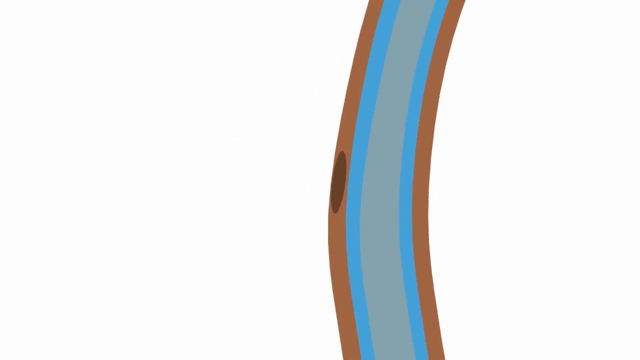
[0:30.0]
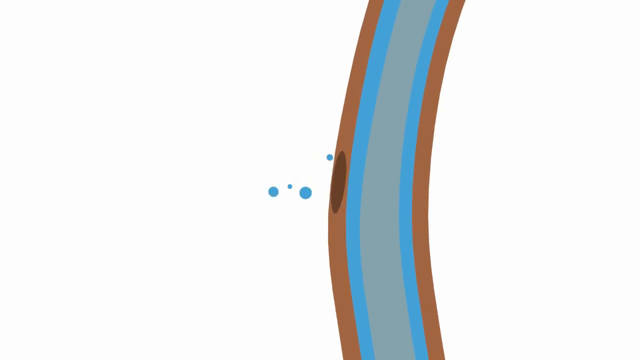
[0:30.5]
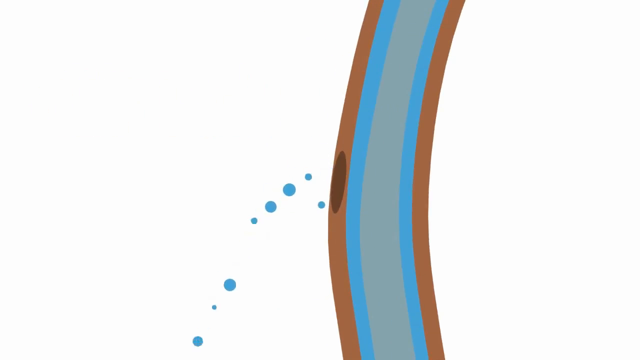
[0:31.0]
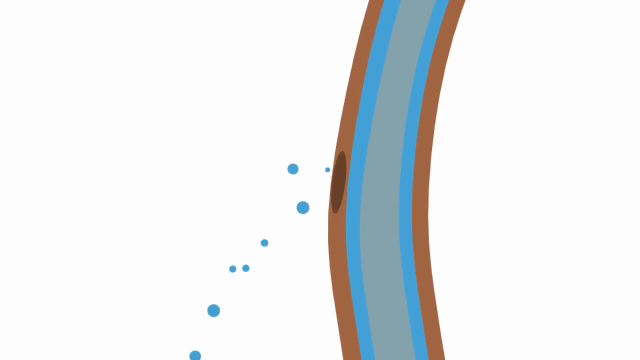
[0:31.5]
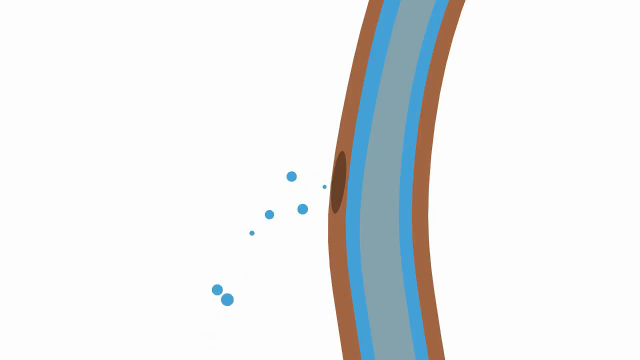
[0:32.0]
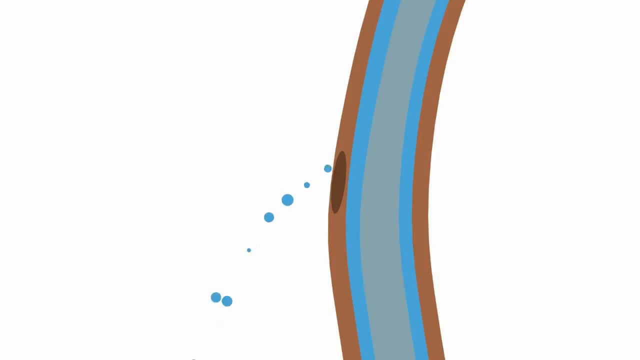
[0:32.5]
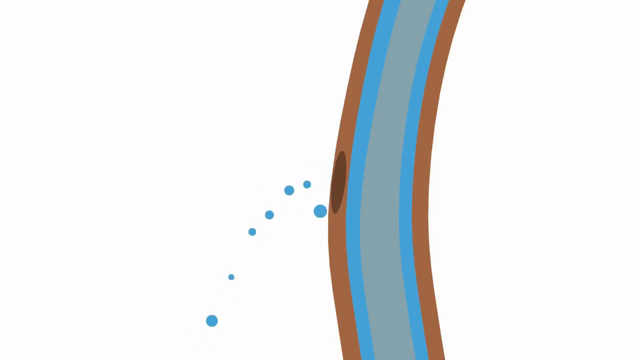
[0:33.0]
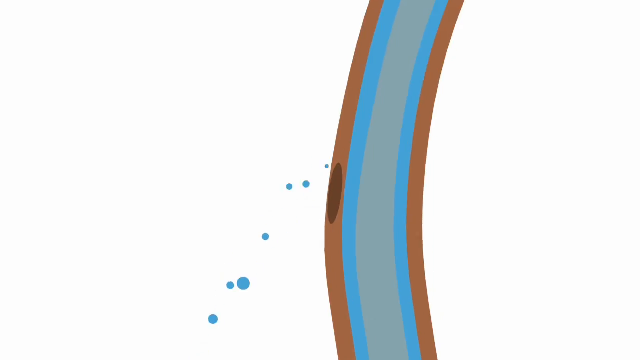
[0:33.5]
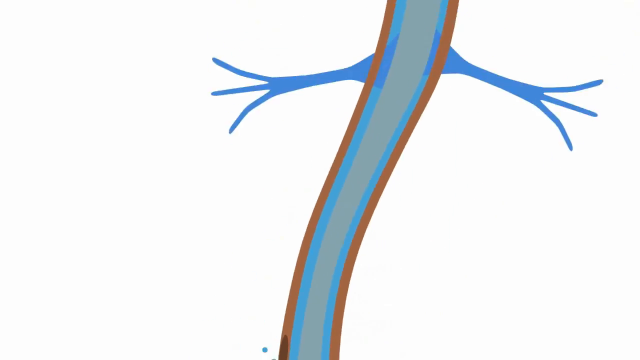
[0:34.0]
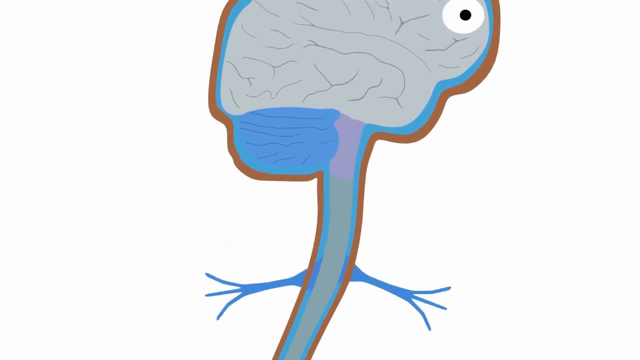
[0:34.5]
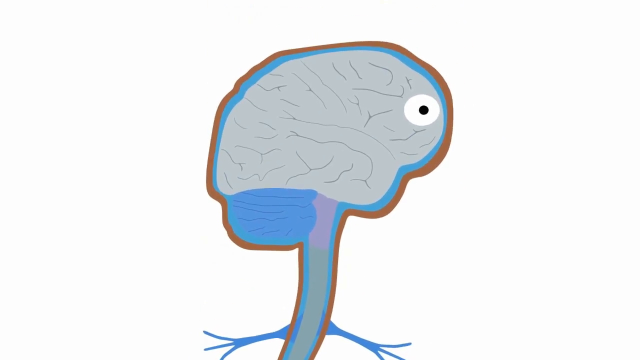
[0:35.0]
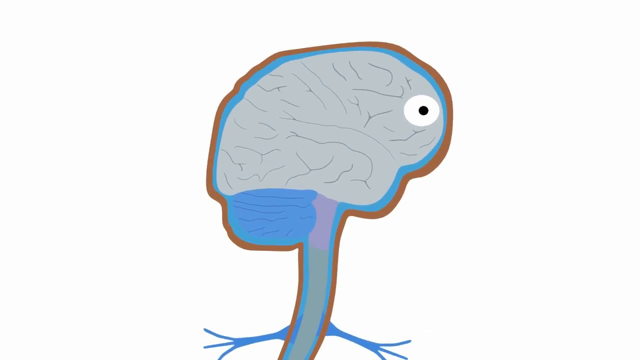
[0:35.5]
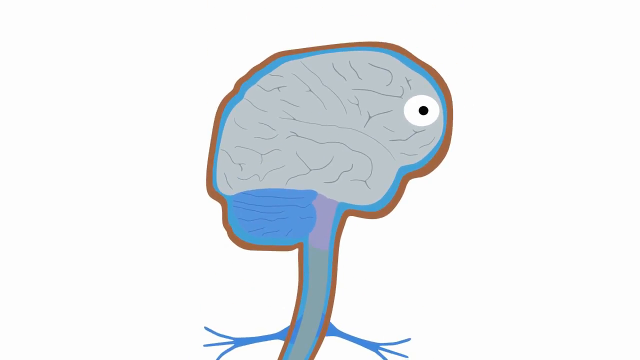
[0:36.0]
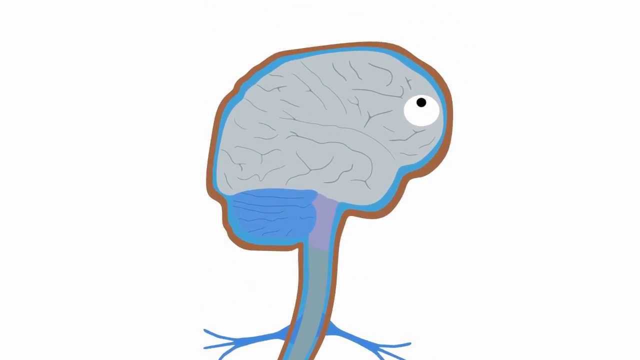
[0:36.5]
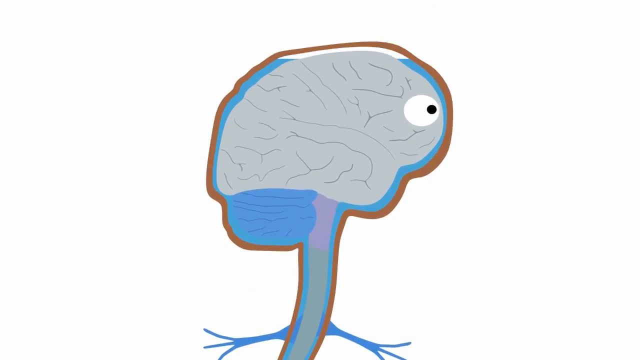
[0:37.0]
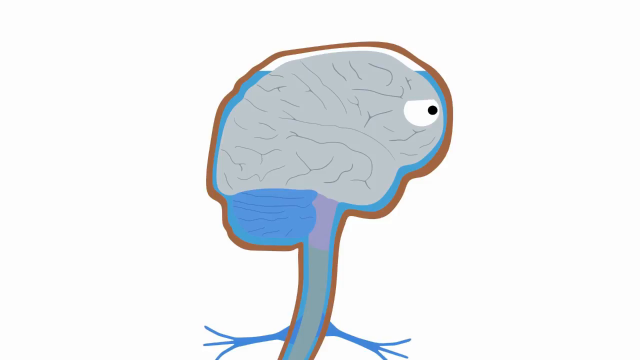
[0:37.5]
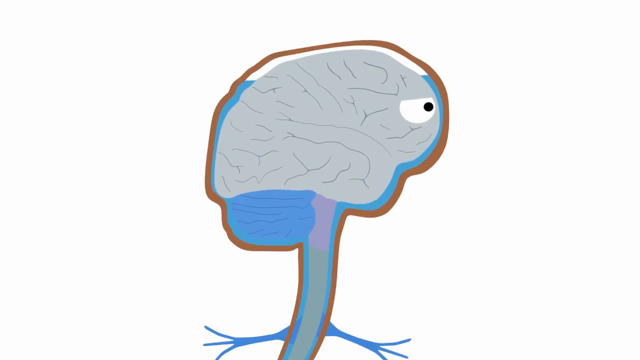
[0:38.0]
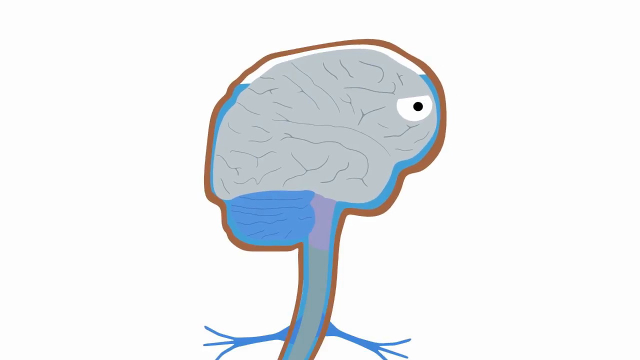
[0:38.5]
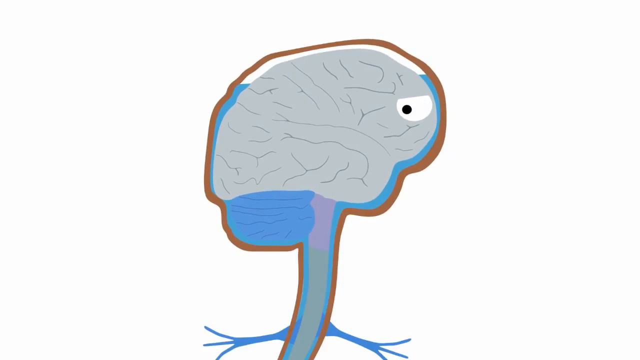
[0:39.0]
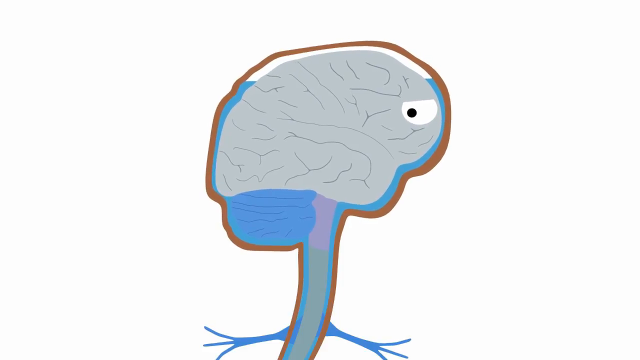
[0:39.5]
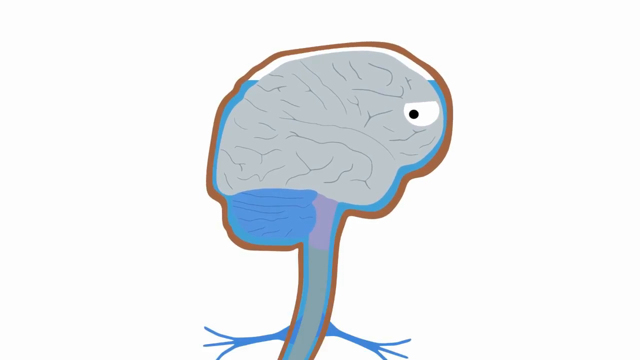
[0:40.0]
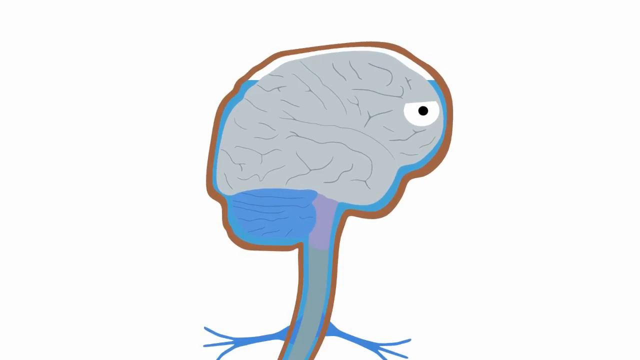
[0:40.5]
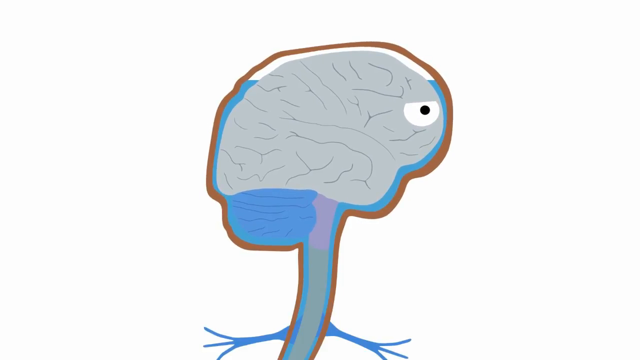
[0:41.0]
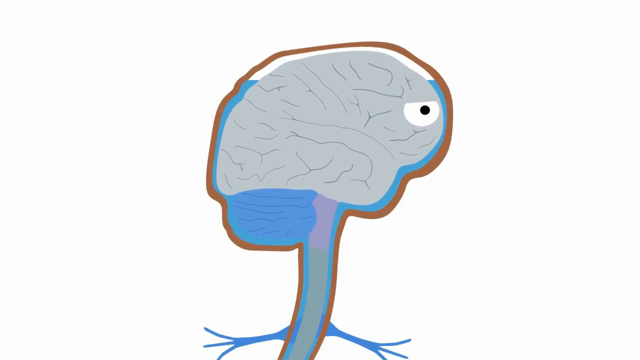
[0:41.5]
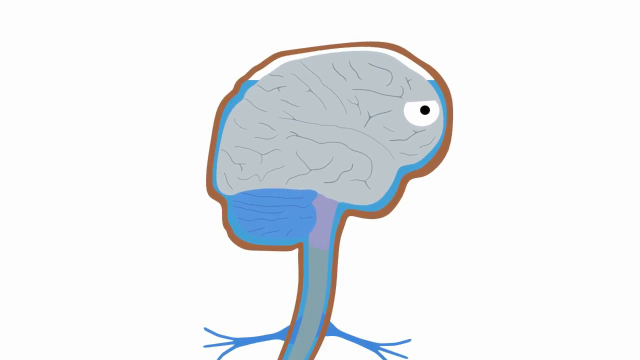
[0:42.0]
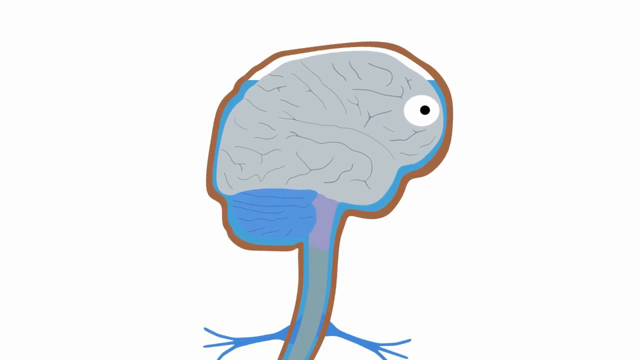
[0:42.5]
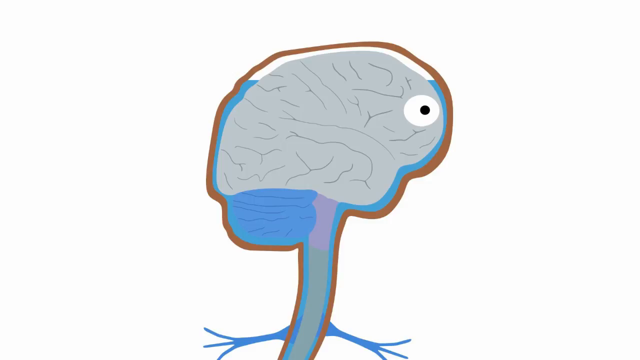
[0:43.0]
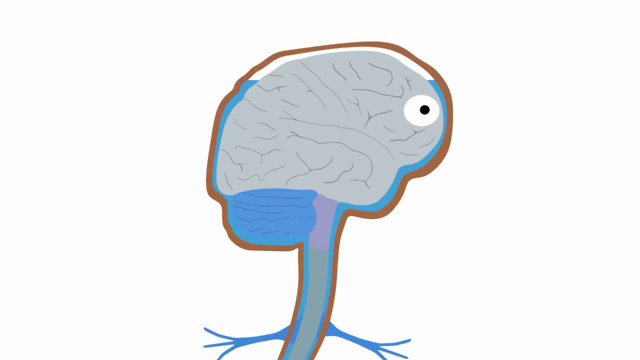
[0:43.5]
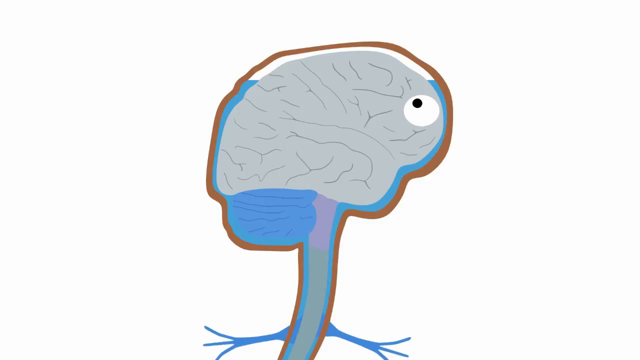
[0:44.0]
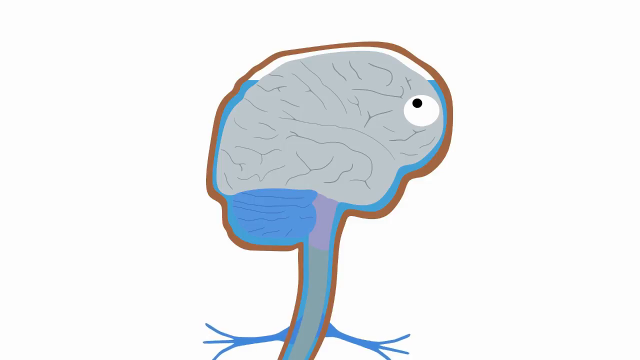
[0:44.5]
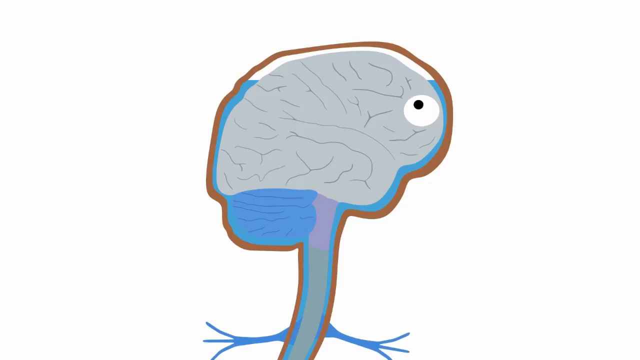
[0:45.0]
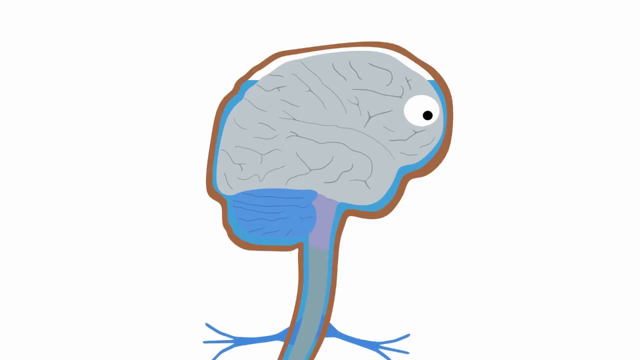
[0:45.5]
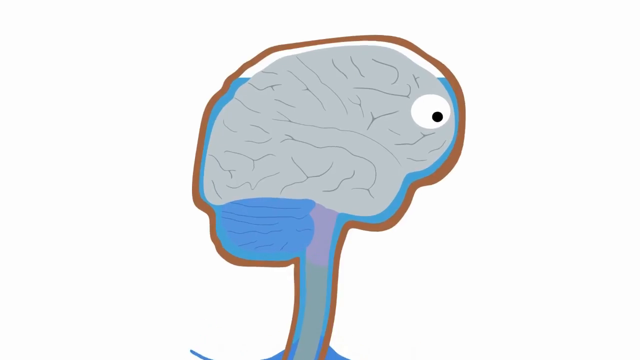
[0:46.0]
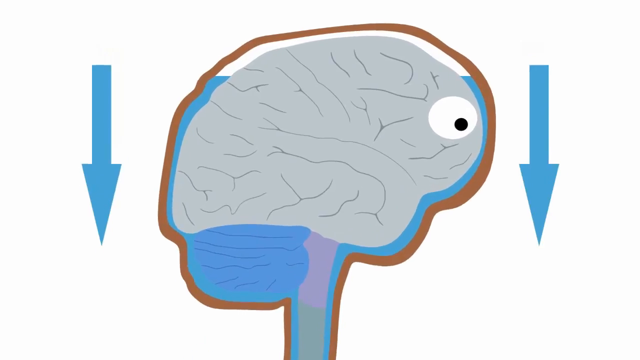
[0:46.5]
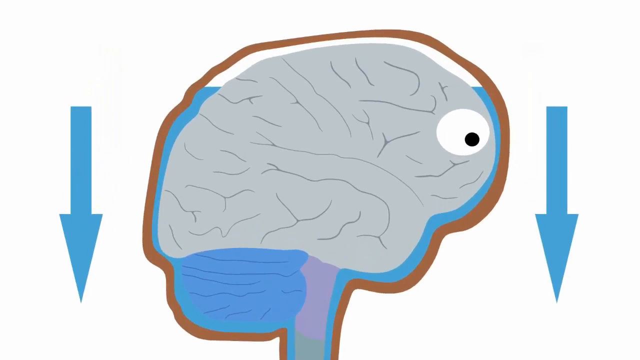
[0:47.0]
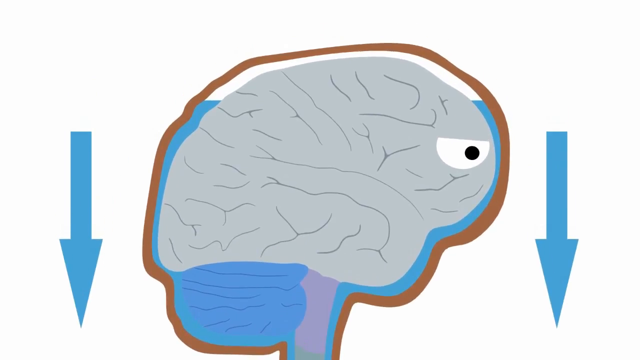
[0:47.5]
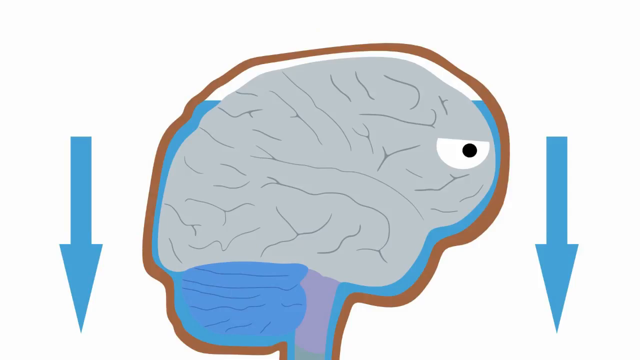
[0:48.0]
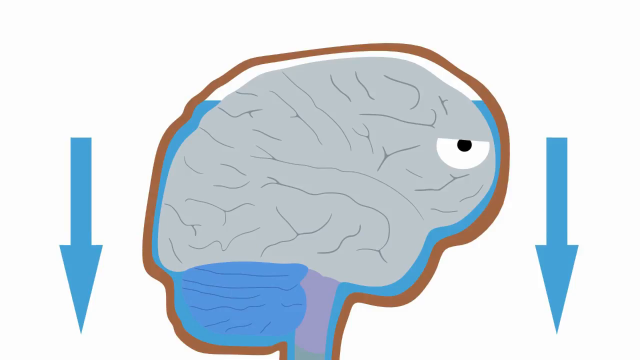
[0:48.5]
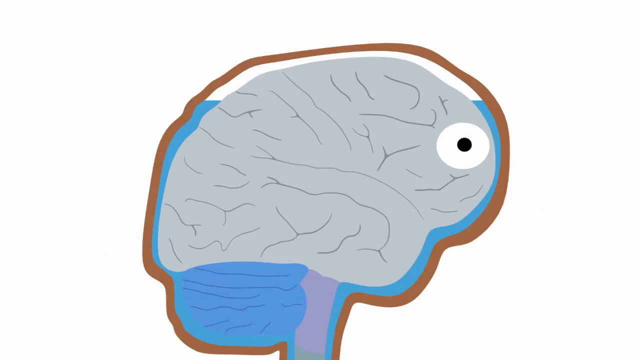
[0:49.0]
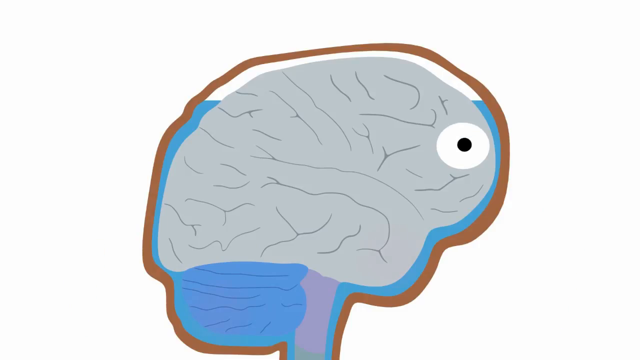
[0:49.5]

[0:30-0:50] The spinal cord has a little hole in it, and blue dots flow out of the hole. The camera moves upward so that only the brain on top of the spinal cord is in view, with the eye whose black pupil moves around. The blue fluid that filled the brain lowers a bit, apparently showing the brain fluid changing after the leak. The view zooms in to the brain, and two blue arrows appear on either side of the skull. A red spot appears on the right side of the head, the side where the eye is, toward where a mouth would be on the skull.